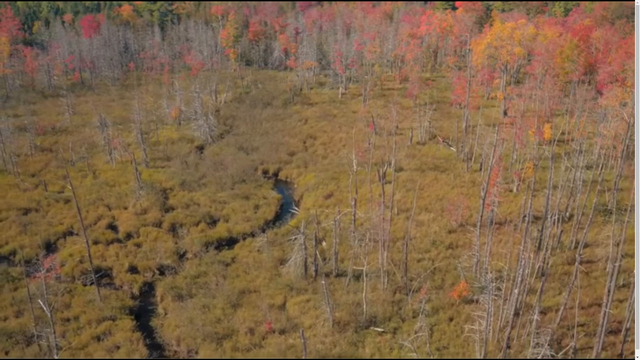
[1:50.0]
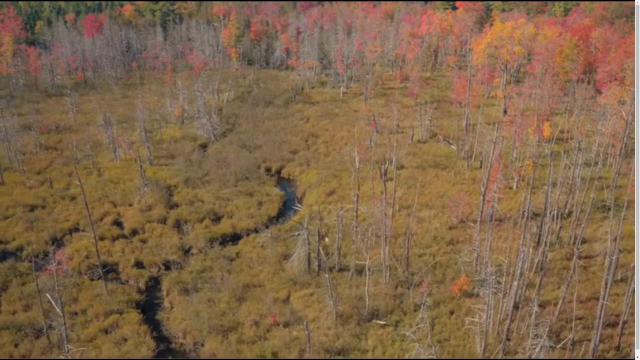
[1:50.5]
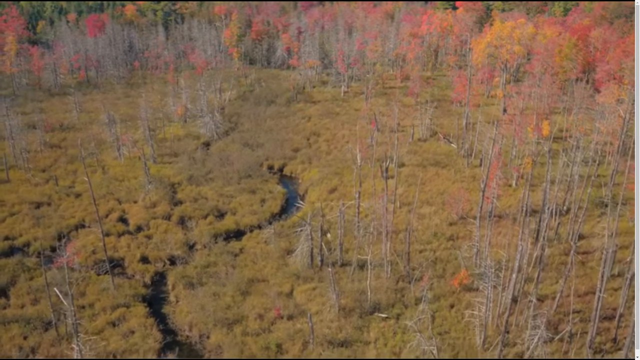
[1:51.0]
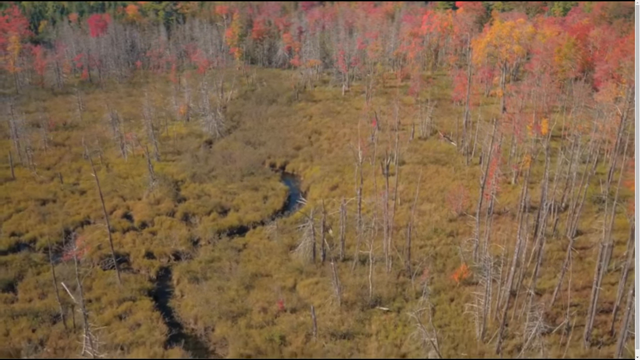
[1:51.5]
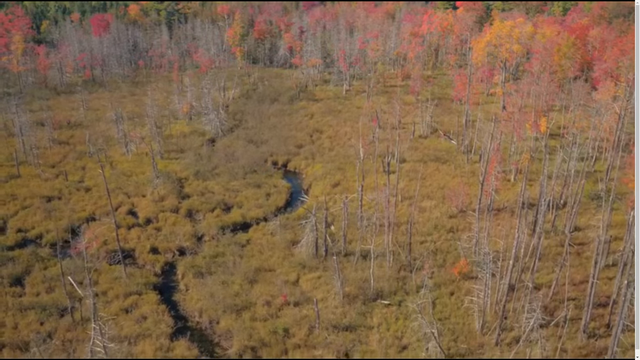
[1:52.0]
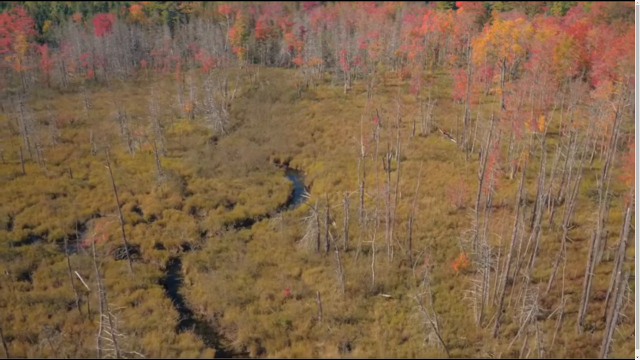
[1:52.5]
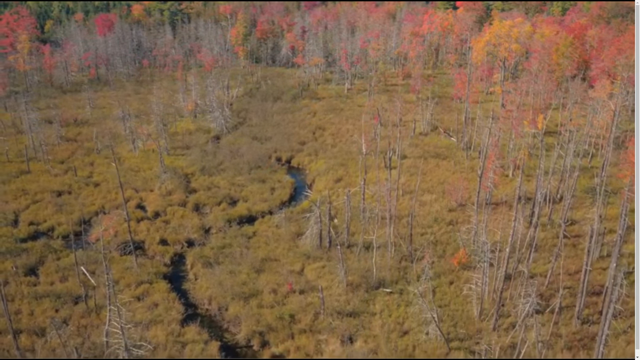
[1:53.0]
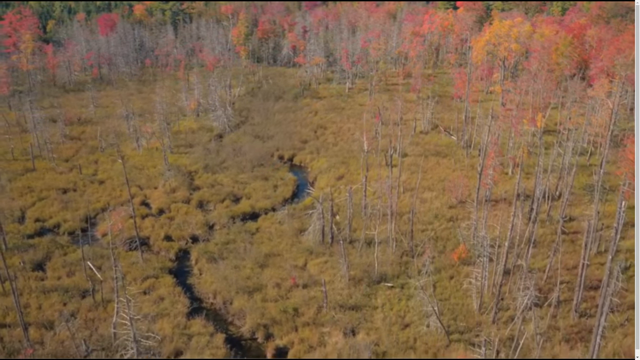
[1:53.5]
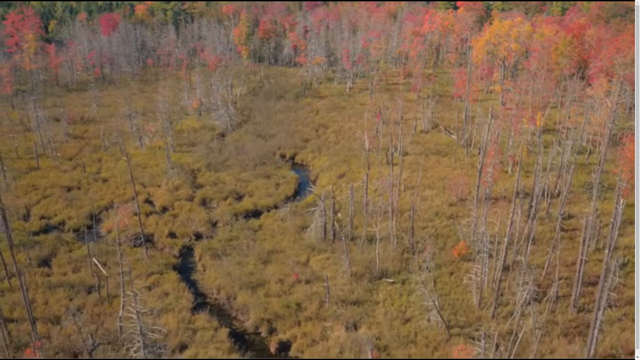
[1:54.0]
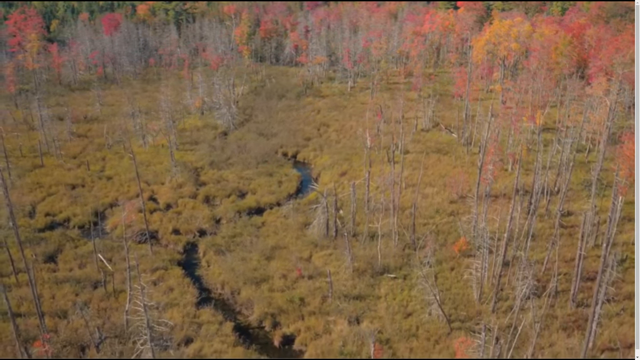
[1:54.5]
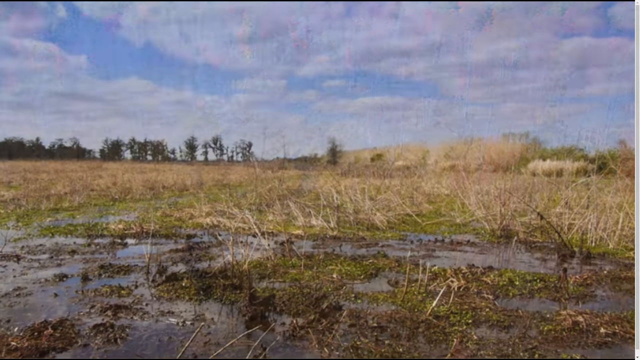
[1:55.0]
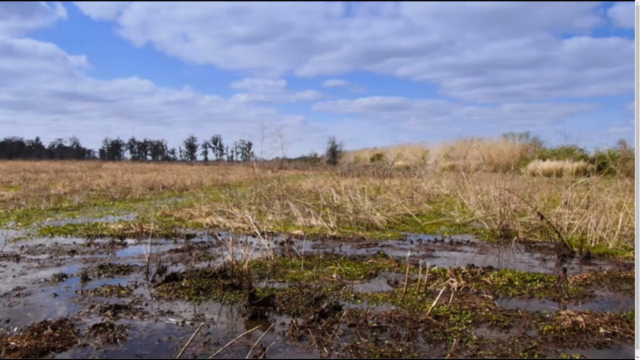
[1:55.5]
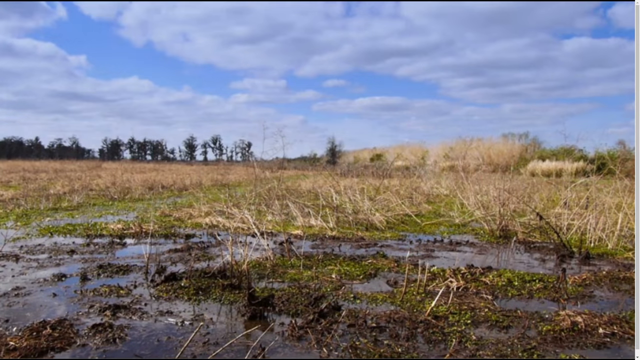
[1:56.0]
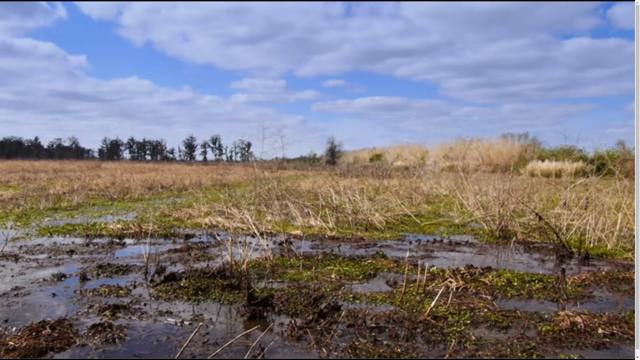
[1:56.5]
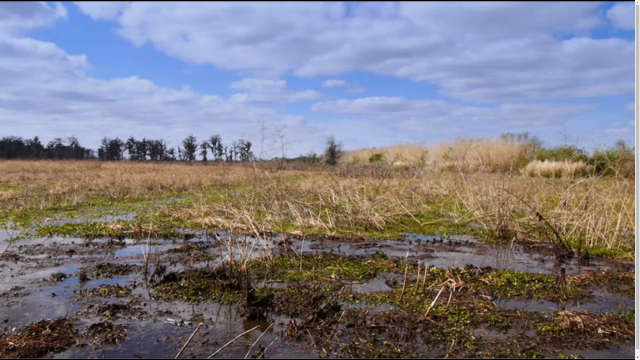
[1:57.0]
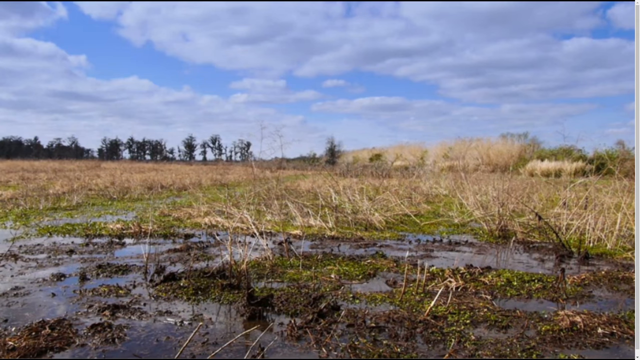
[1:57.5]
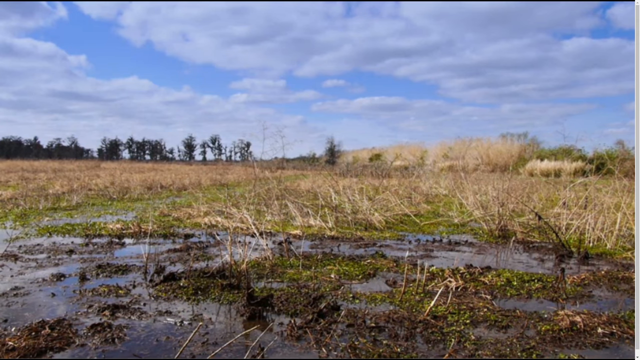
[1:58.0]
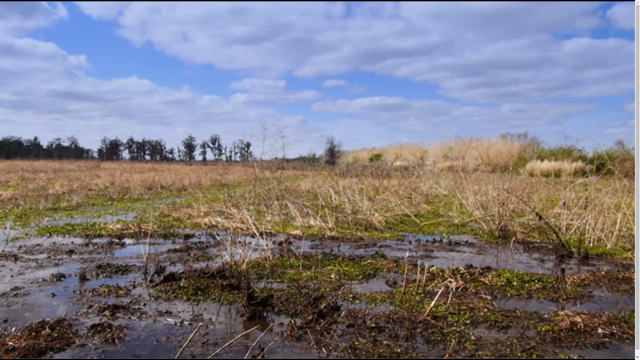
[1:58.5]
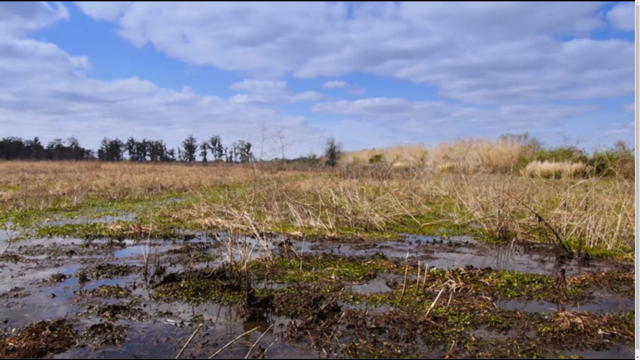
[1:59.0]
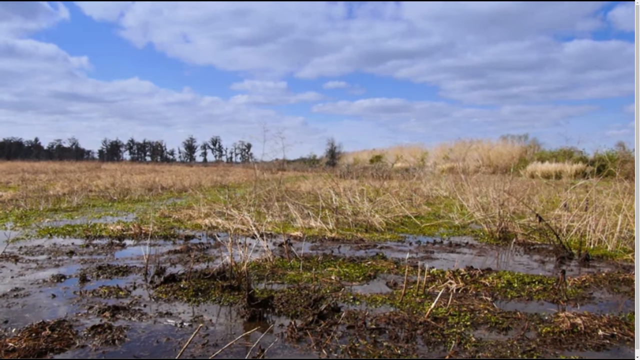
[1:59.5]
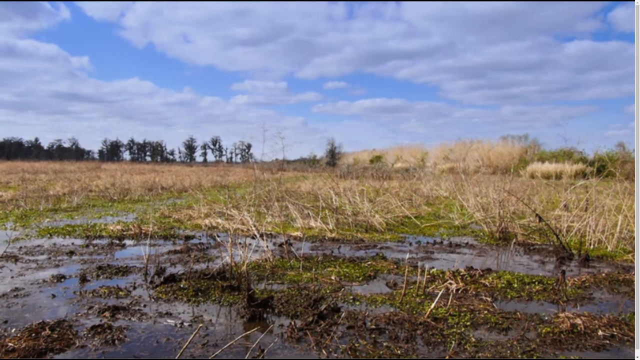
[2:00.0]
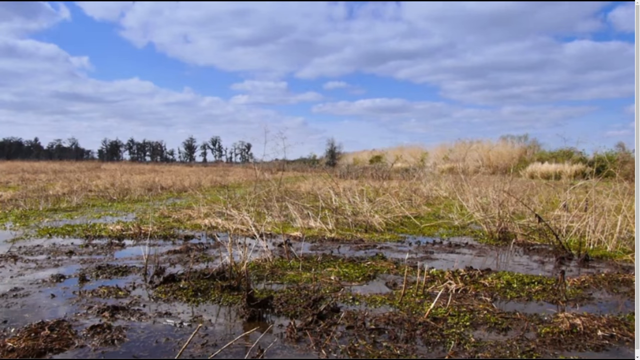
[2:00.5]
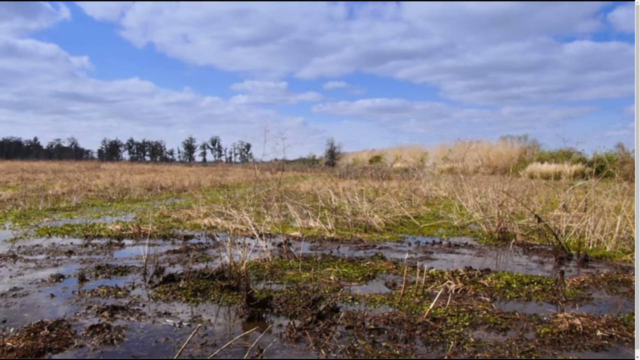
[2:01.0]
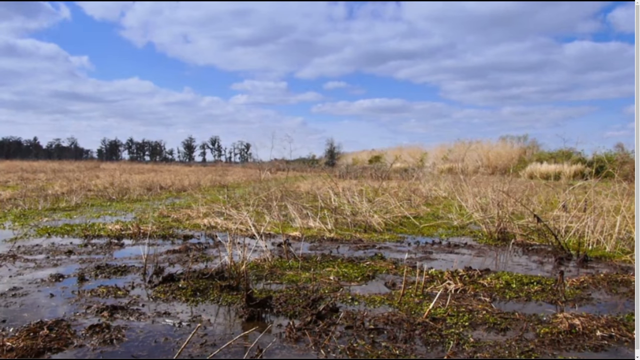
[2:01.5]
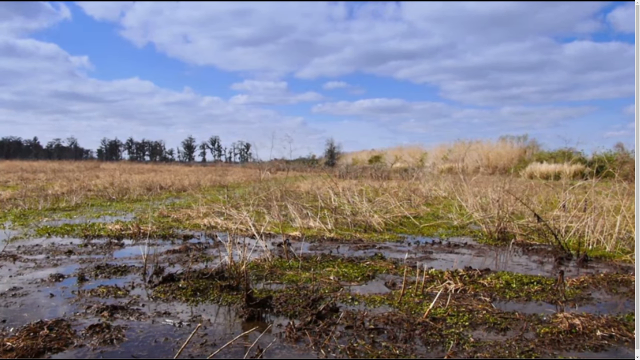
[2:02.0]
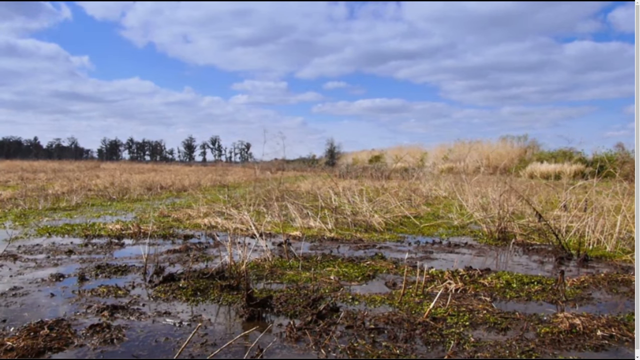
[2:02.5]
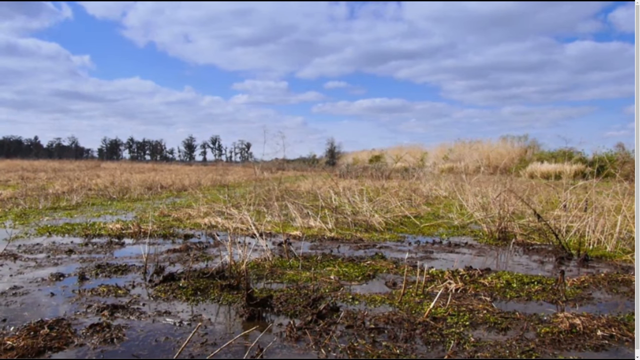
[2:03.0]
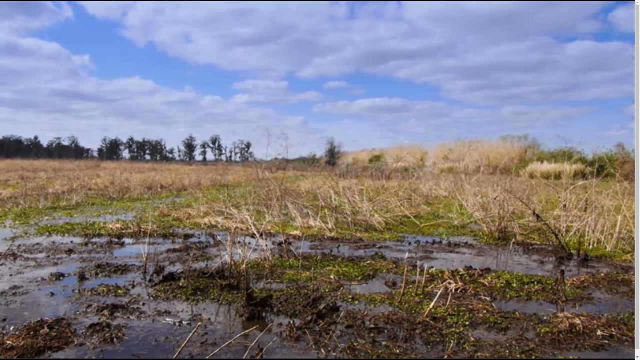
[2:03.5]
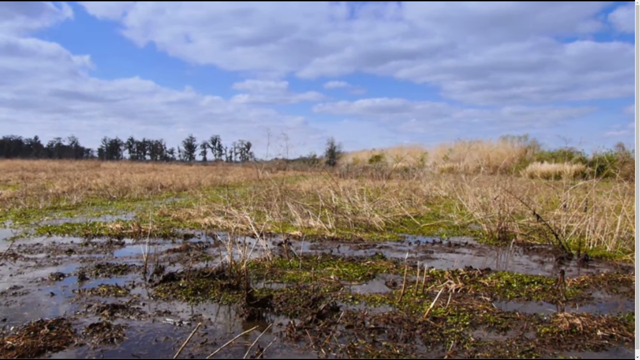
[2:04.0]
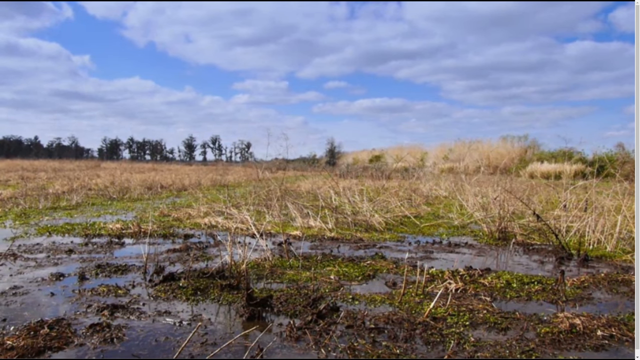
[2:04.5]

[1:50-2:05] The winding river is surrounded by tall orange and red fall-colored trees, with shorter green foliage beneath them. A close-up shows what appears to be a swampy wetland area with very dark colored foliage growing from it. There are some white pieces of grass that almost look like the color of straw from a bale of hay. The sky is still blue, and the white clouds are a lot more prevalent.